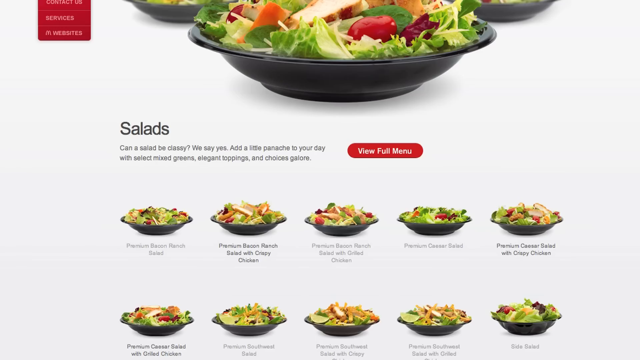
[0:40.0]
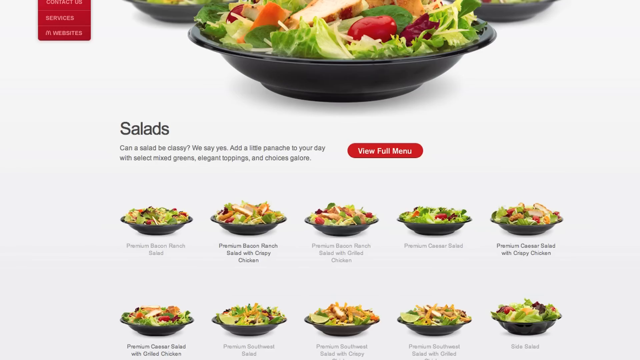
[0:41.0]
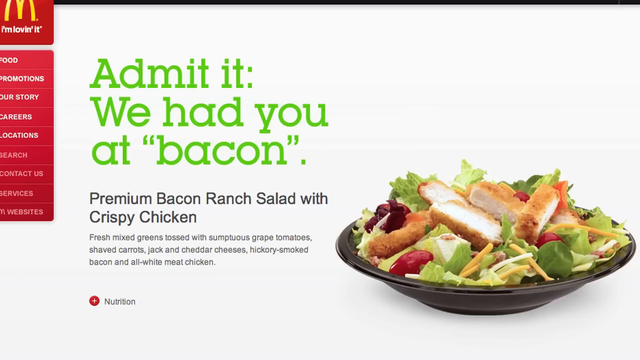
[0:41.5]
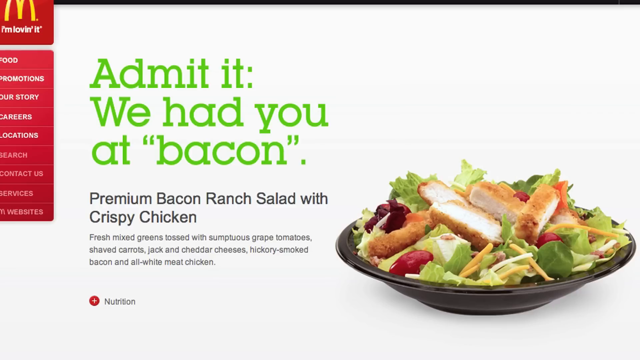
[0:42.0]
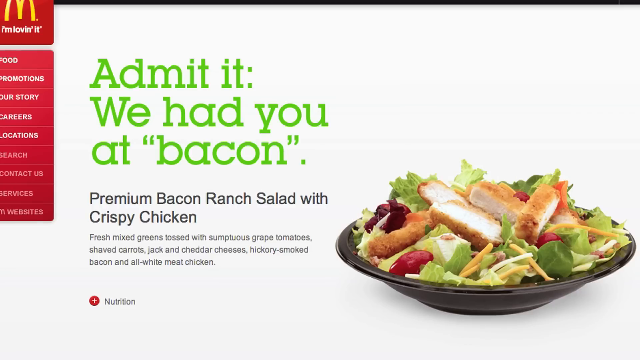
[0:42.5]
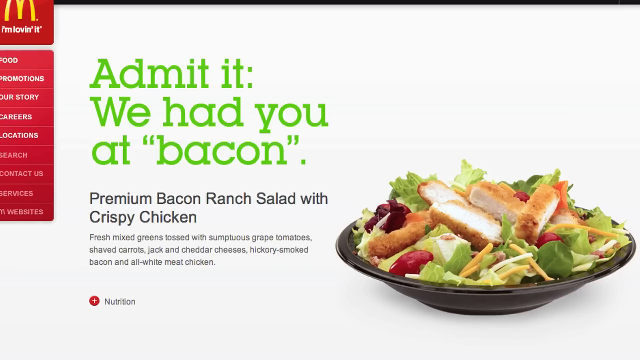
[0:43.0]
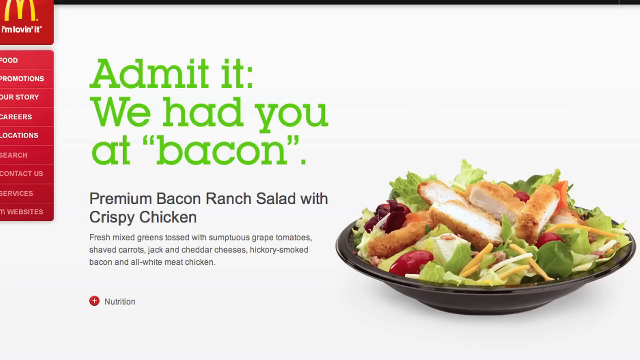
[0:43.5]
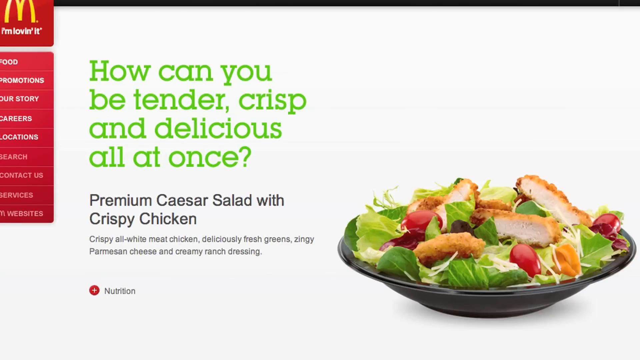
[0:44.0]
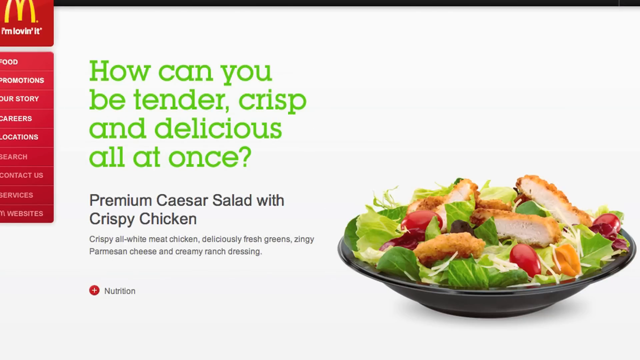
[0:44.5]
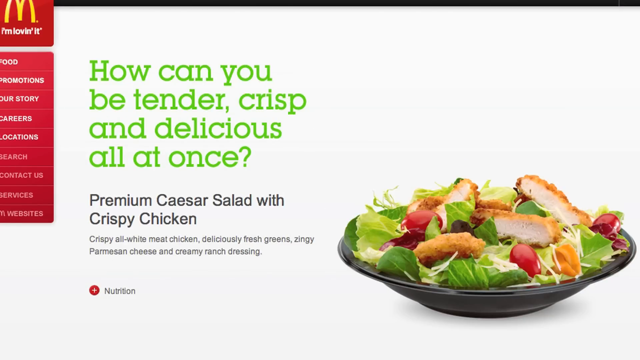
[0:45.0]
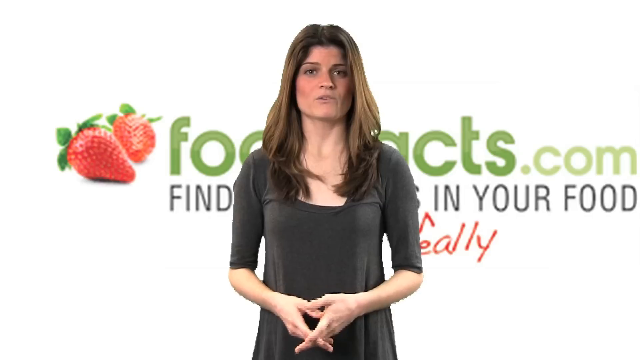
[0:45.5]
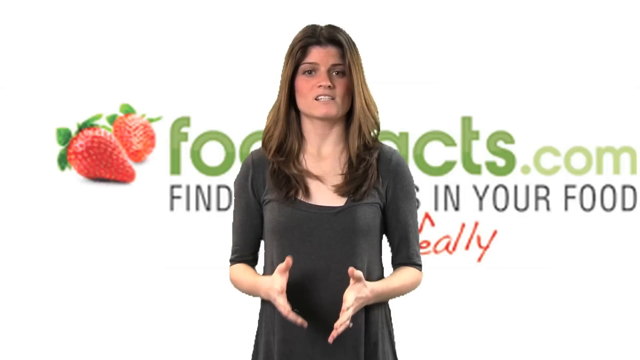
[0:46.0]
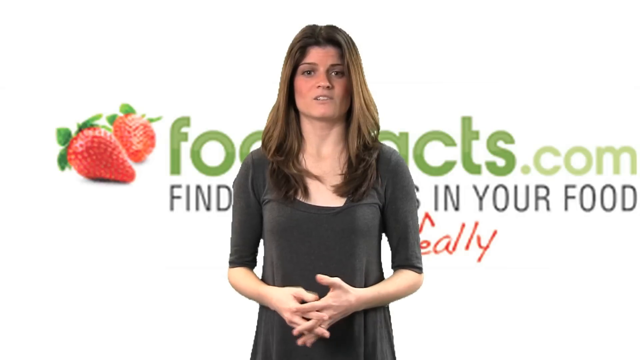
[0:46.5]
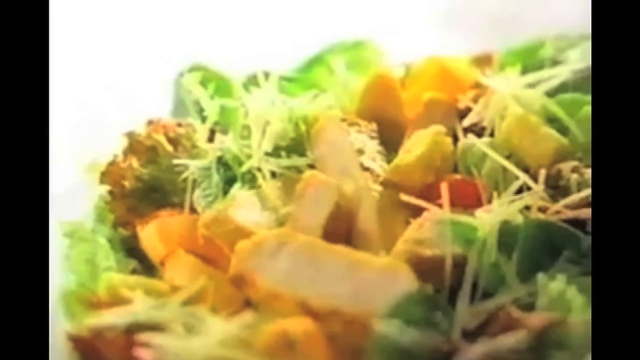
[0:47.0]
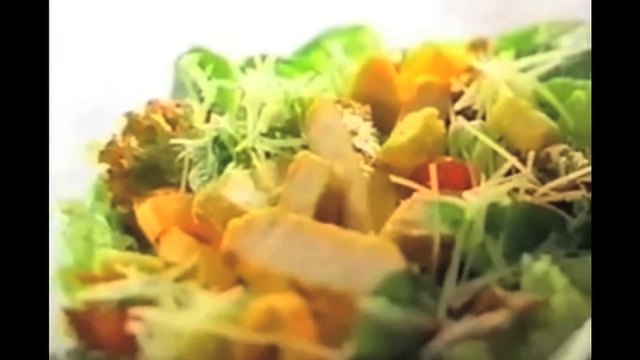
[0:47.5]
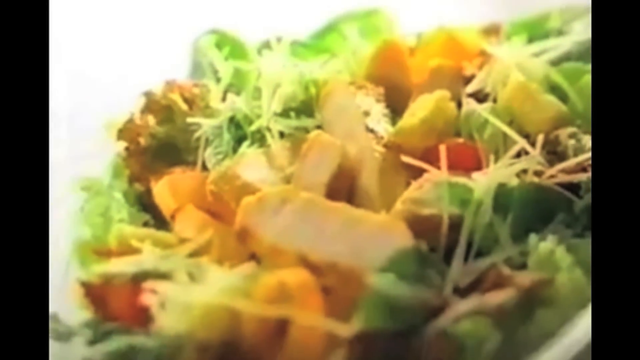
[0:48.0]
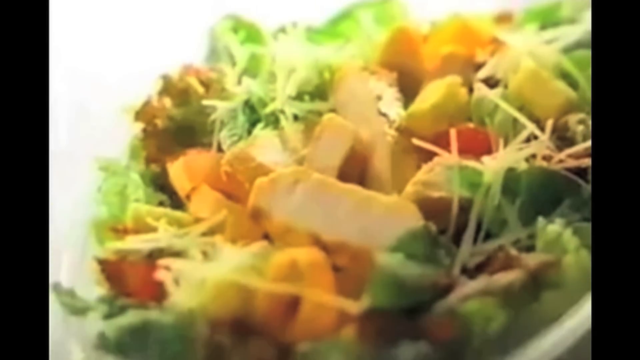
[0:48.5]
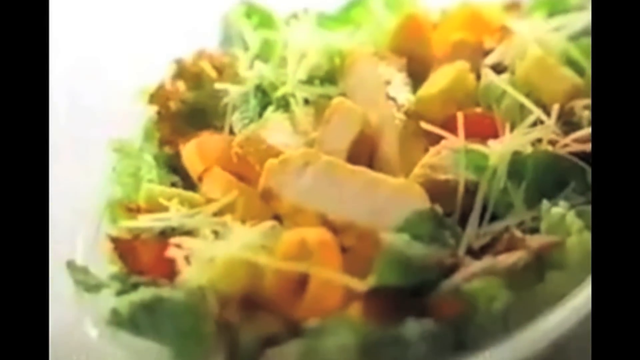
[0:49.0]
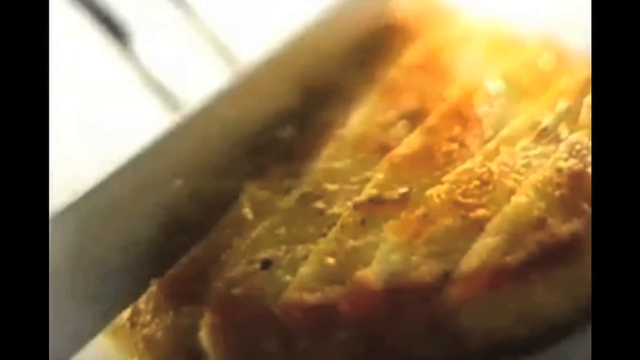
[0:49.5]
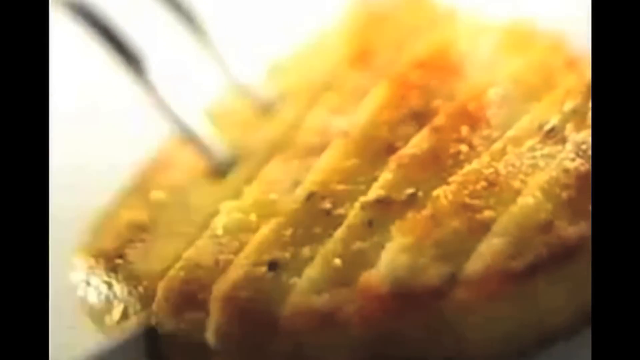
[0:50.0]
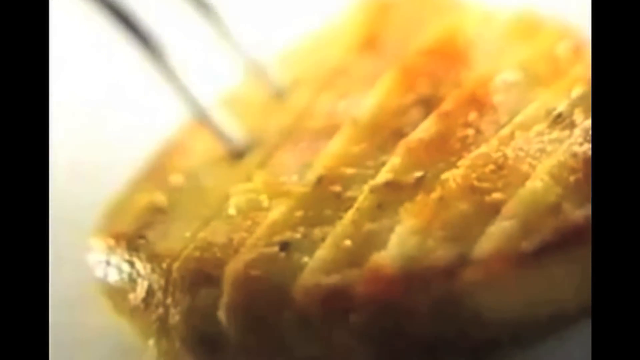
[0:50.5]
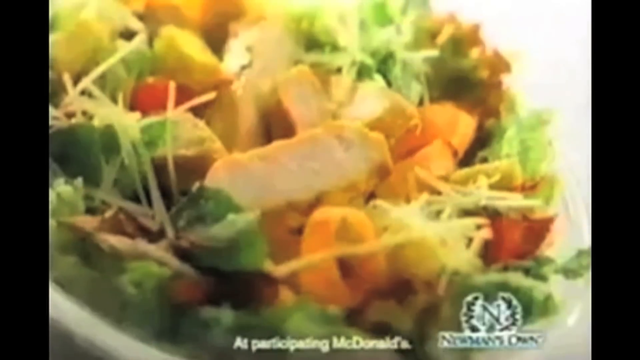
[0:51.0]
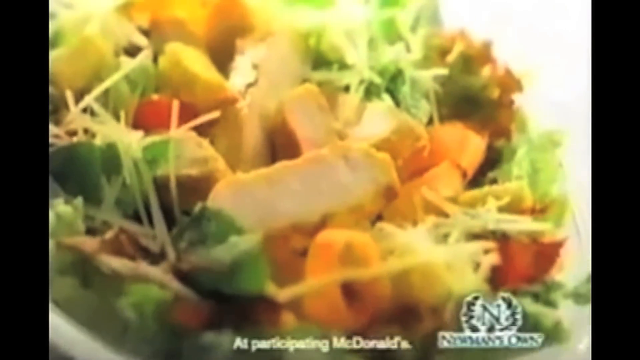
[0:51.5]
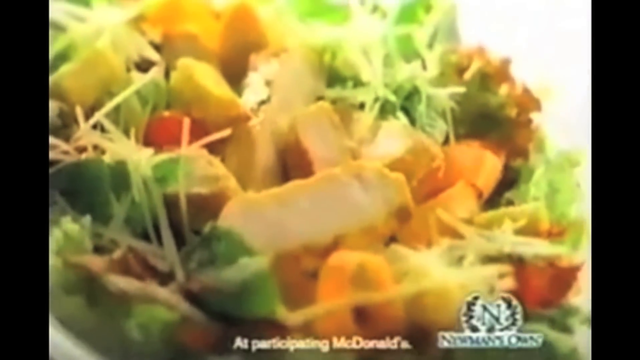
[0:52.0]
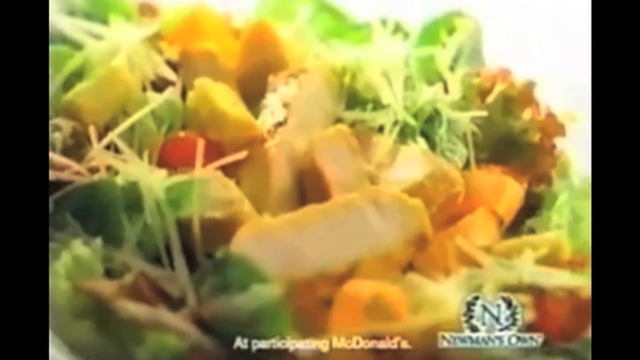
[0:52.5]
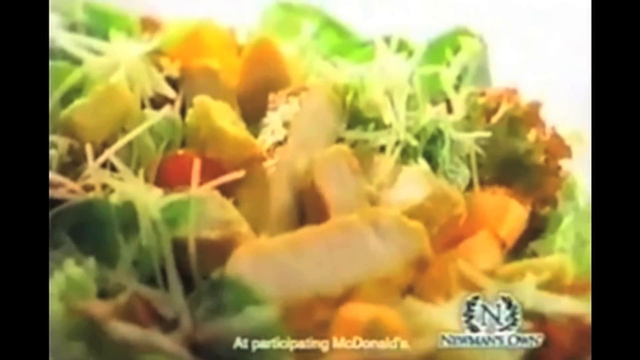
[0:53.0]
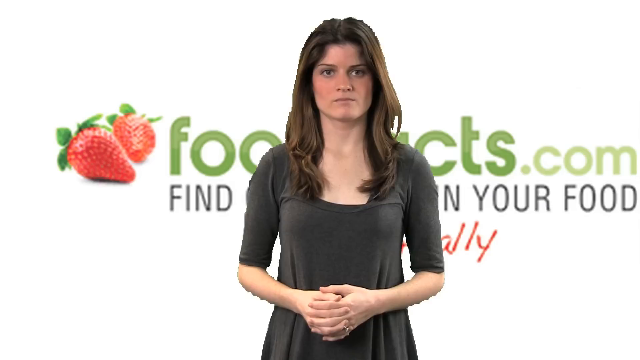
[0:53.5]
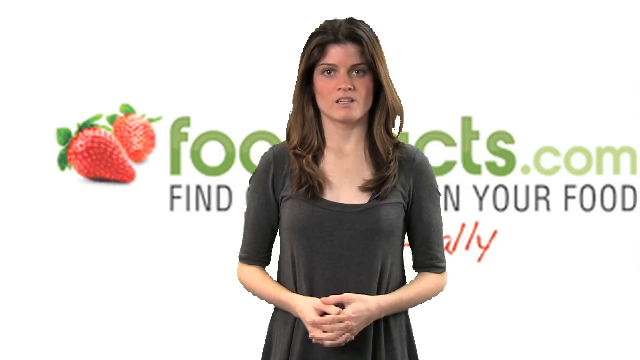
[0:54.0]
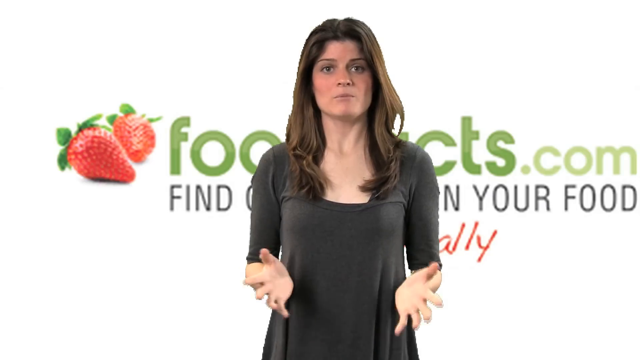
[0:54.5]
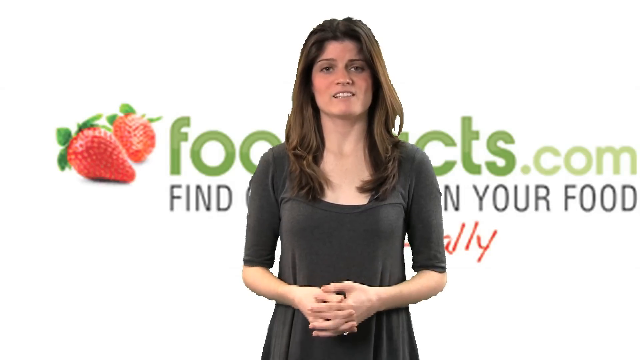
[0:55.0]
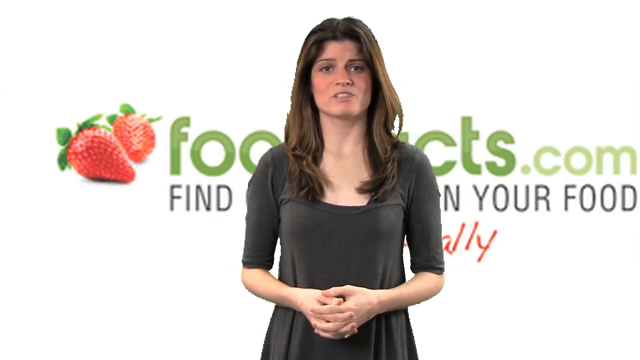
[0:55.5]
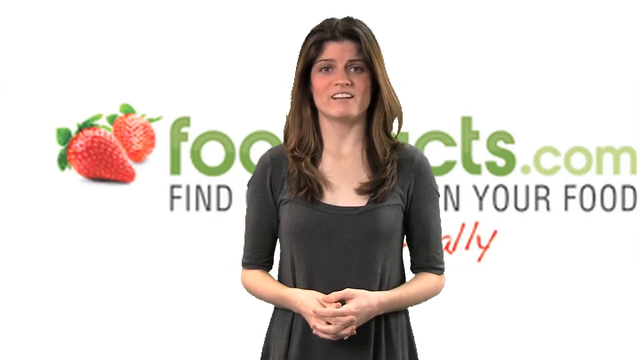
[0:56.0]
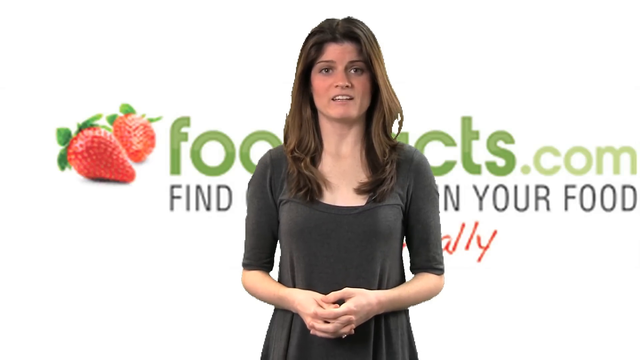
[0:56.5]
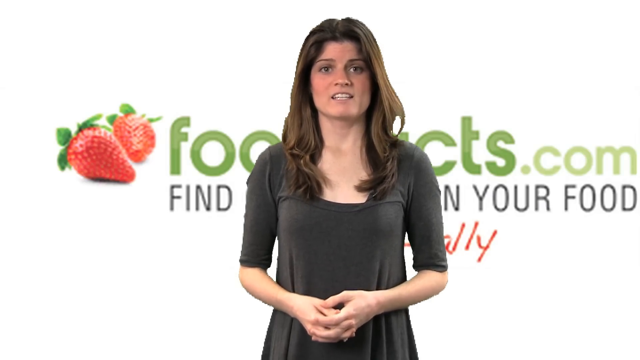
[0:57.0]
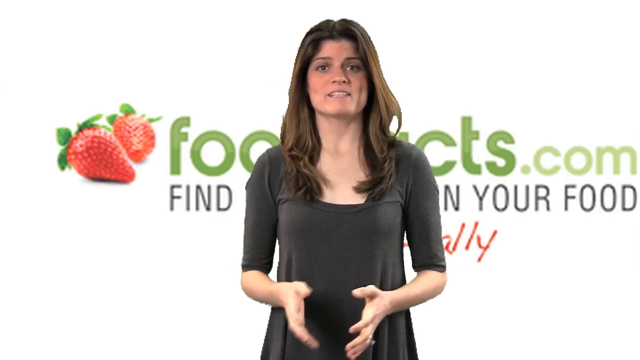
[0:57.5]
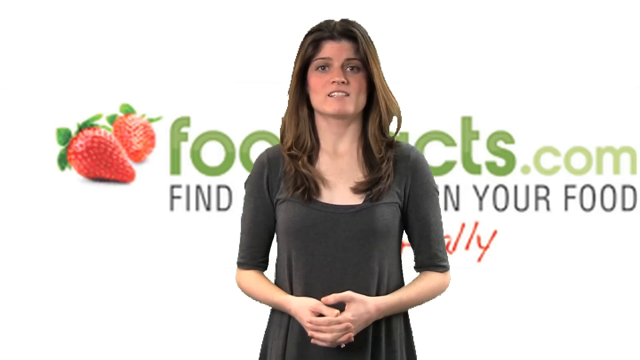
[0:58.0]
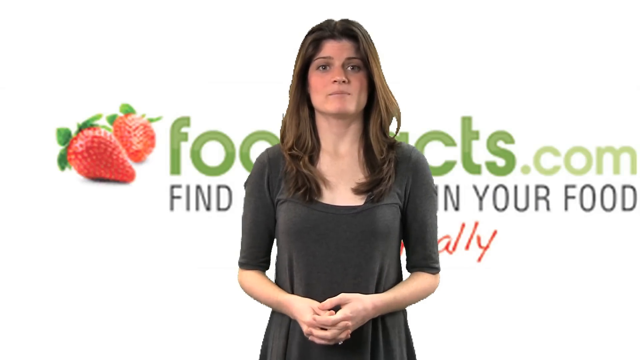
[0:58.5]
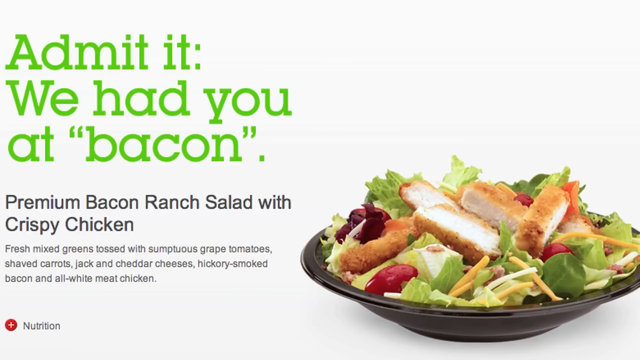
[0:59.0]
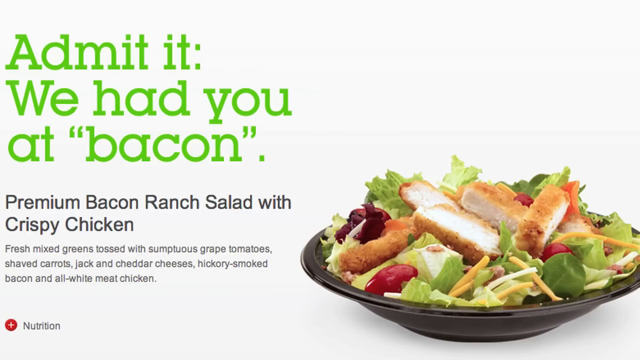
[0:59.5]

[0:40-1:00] The salads continue to be shown. First is the premium bacon ranch salad with crispy chicken, with a tagline ending "we had you at bacon" and a short description that includes "tossed with sumptuous ripe tomatoes, shaved carrots, jack and cheddar cheeses, hickory smoked bacon and all white meat chicken". There is a plus button in a circle next to the word "nutrition". Next is the premium Caesar salad with crispy chicken, with the tagline "how can you be tender crisp and delicious all at once". The woman then speaks to the camera again, gesturing with her hands. A video follows showing a very close-up overhead shot of a salad, then something, apparently chicken, being cut with what seem to be tongs and a knife, then another overhead shot of a salad. The woman speaks again, moving her hands and pointing toward the camera.